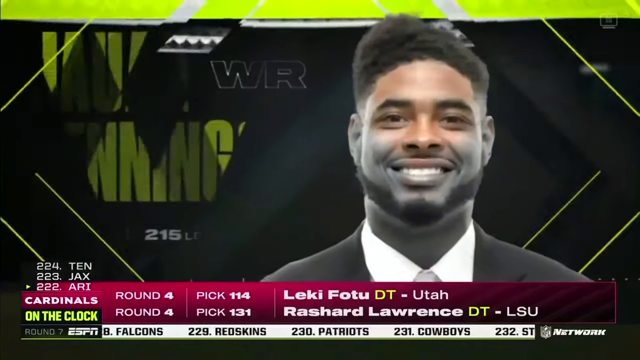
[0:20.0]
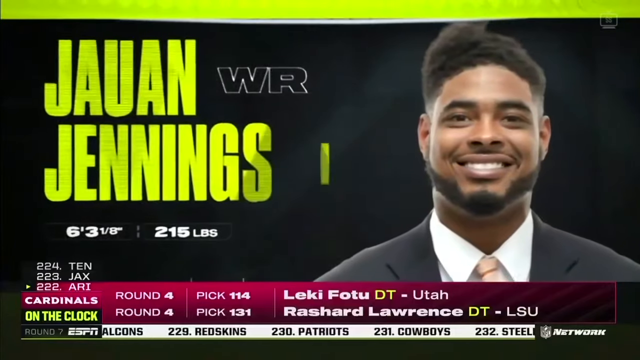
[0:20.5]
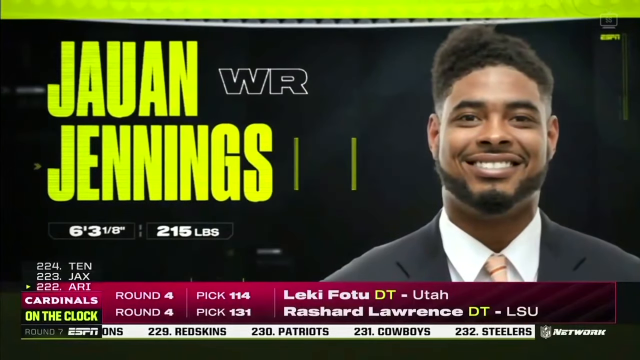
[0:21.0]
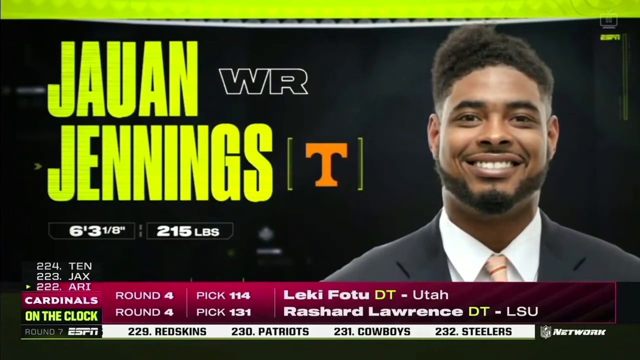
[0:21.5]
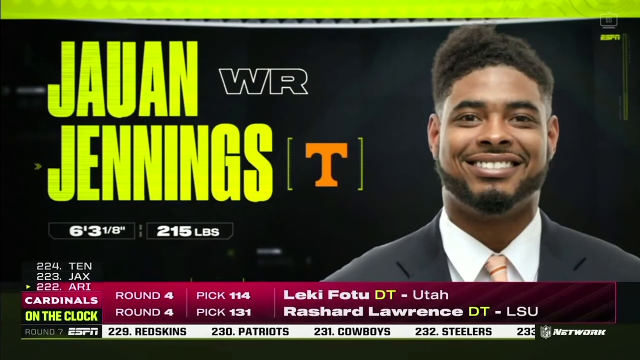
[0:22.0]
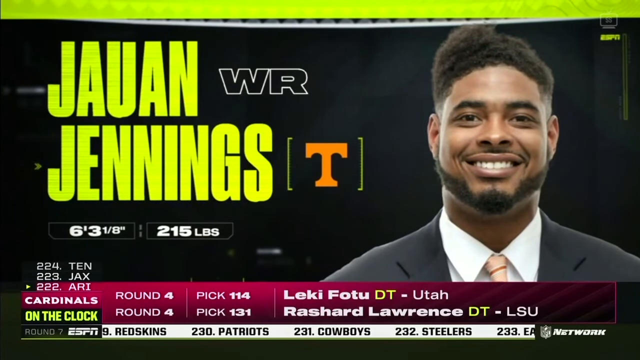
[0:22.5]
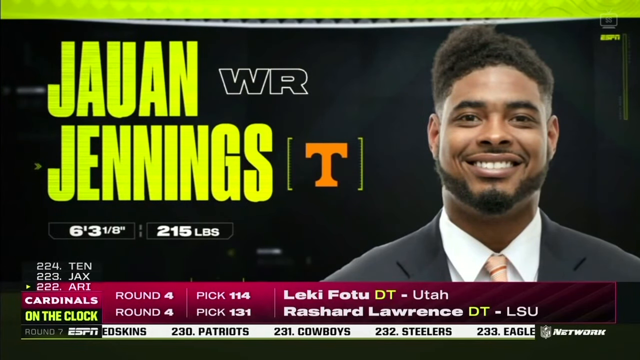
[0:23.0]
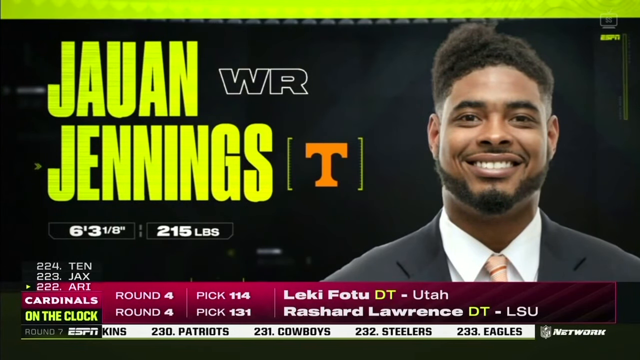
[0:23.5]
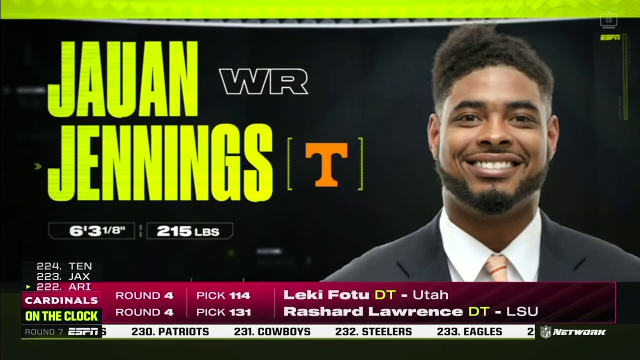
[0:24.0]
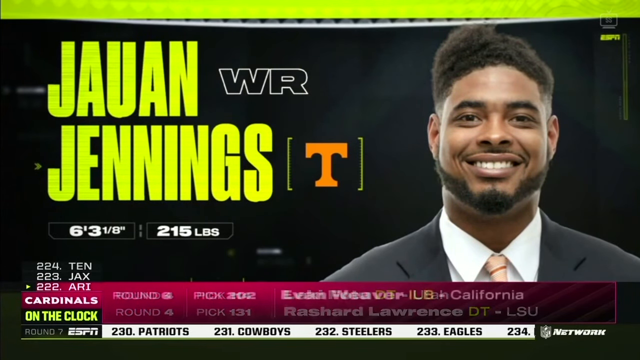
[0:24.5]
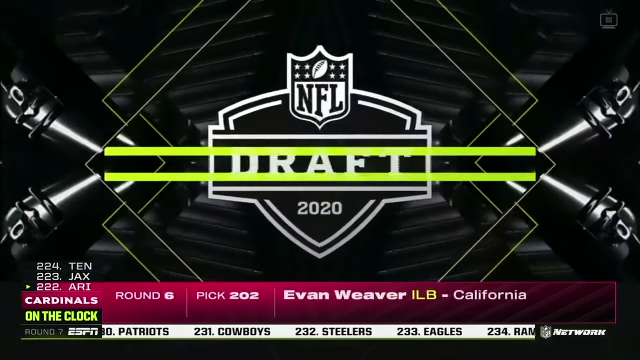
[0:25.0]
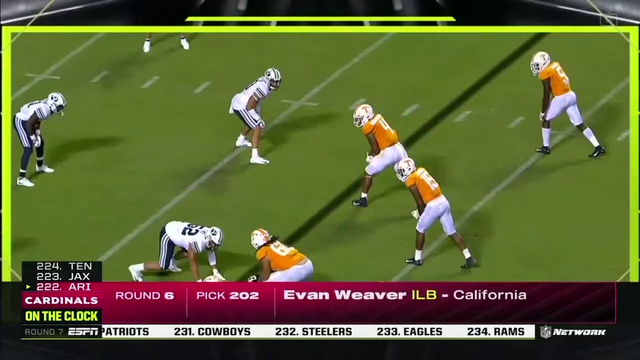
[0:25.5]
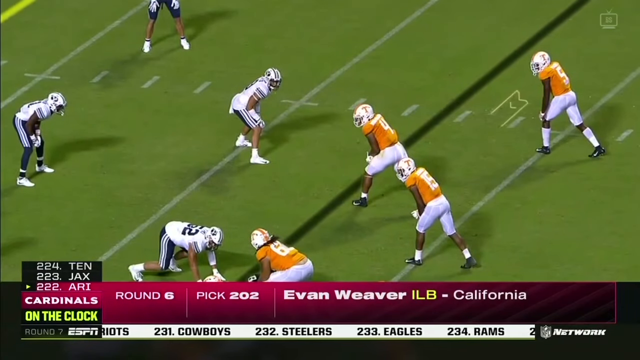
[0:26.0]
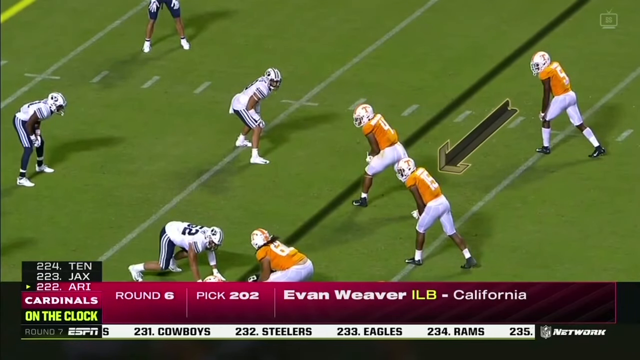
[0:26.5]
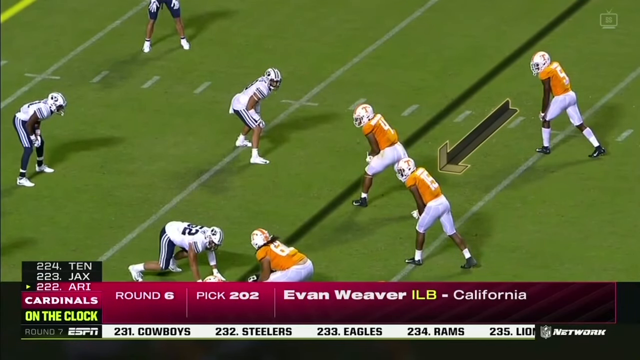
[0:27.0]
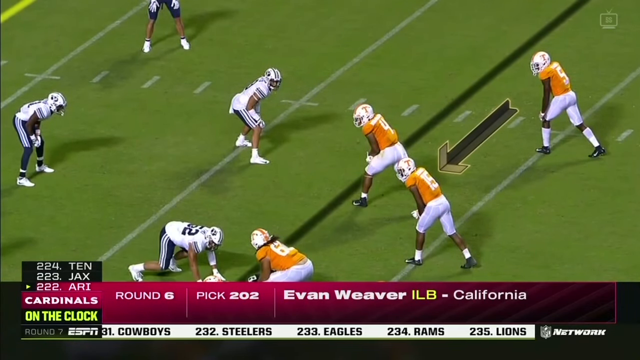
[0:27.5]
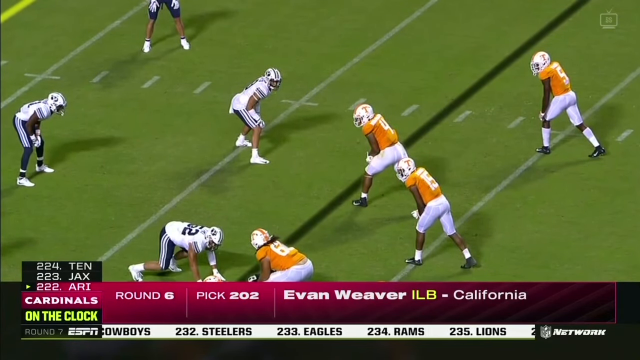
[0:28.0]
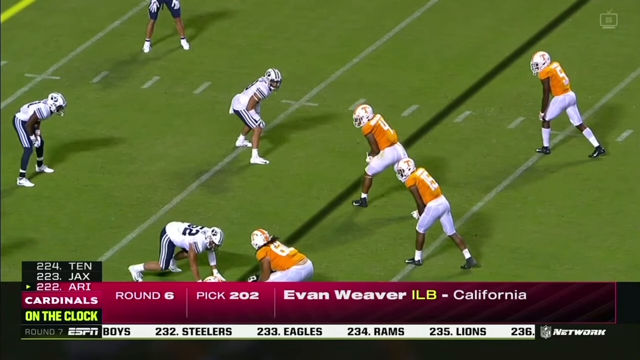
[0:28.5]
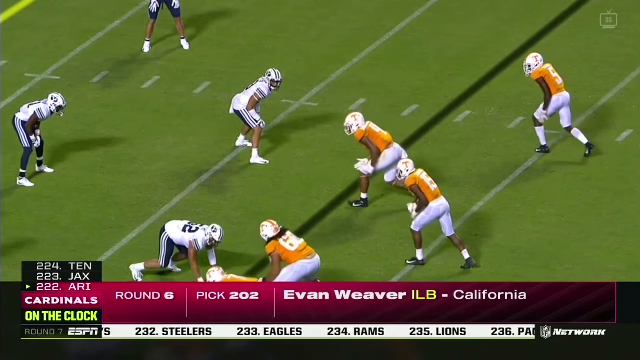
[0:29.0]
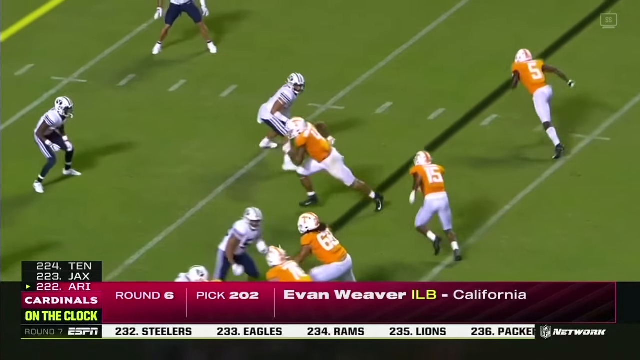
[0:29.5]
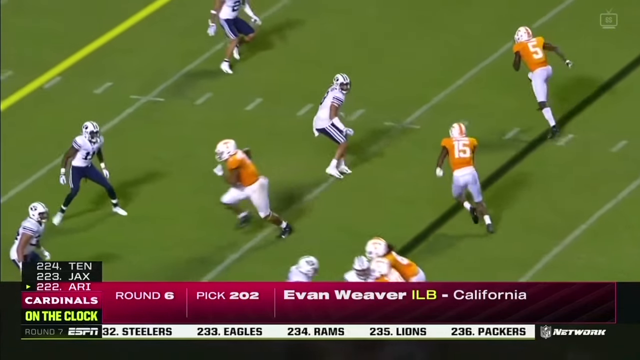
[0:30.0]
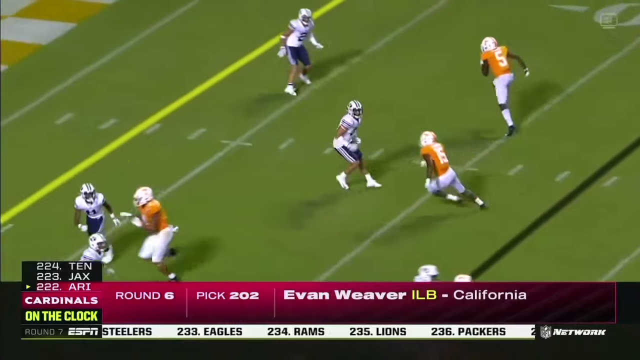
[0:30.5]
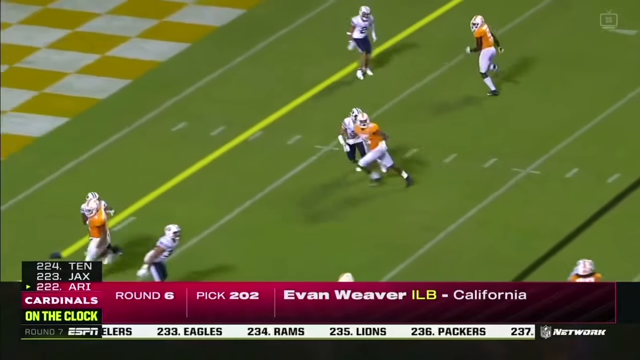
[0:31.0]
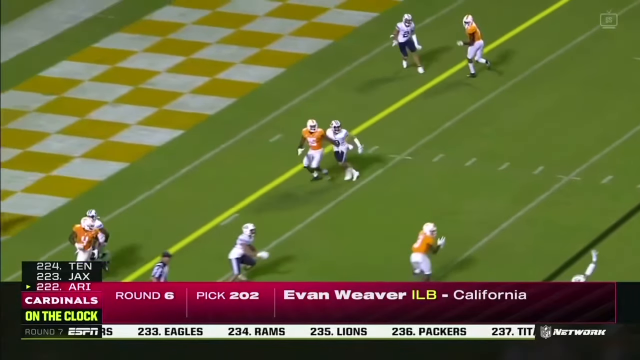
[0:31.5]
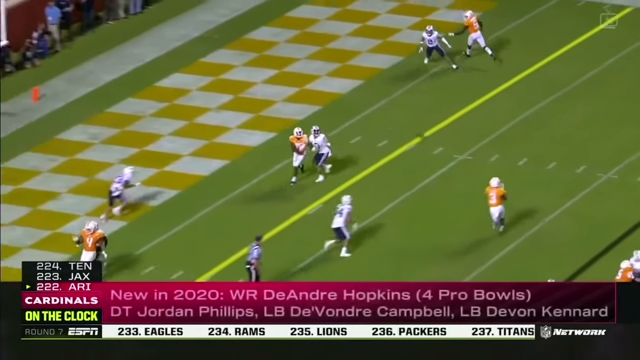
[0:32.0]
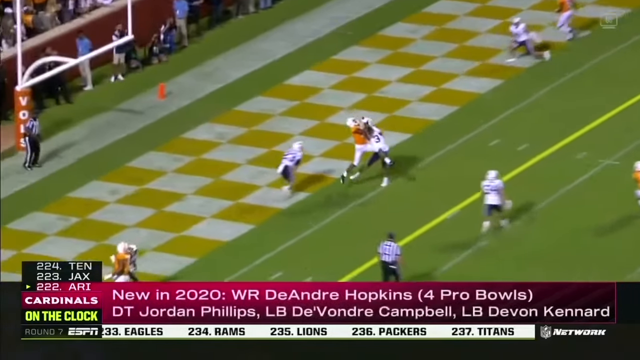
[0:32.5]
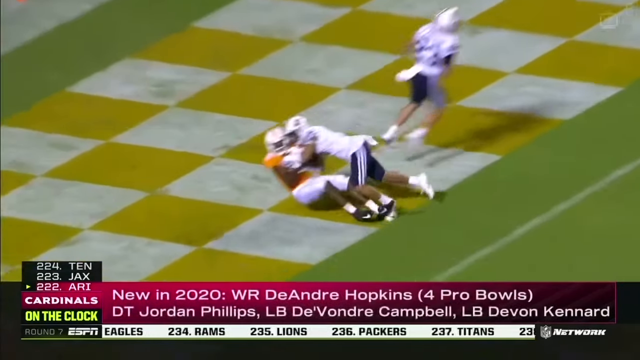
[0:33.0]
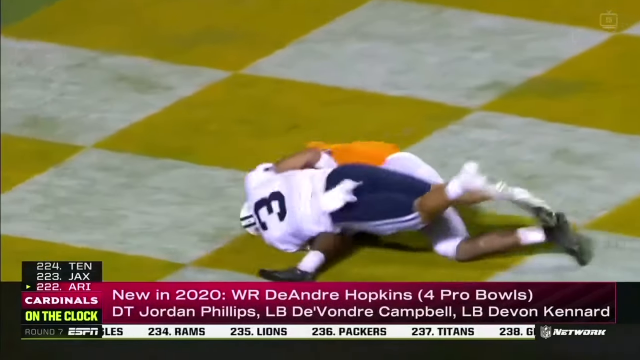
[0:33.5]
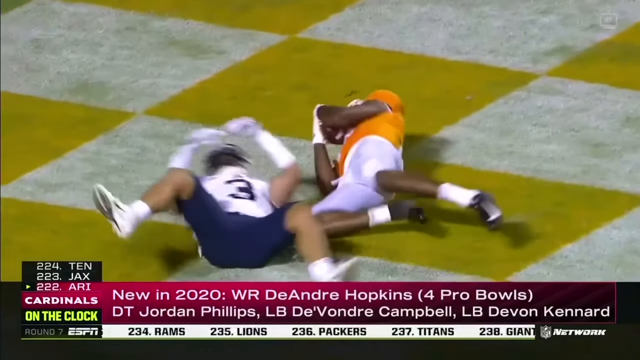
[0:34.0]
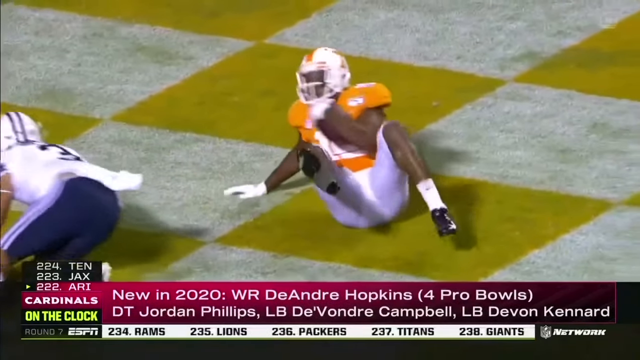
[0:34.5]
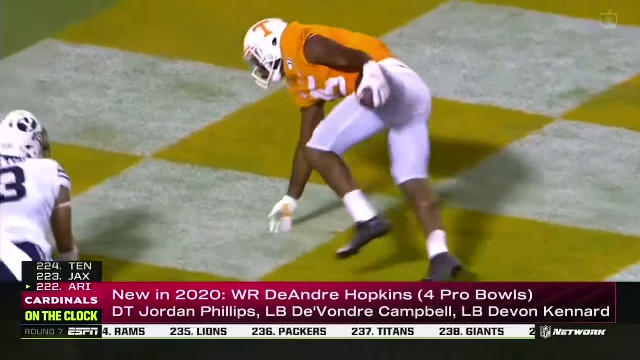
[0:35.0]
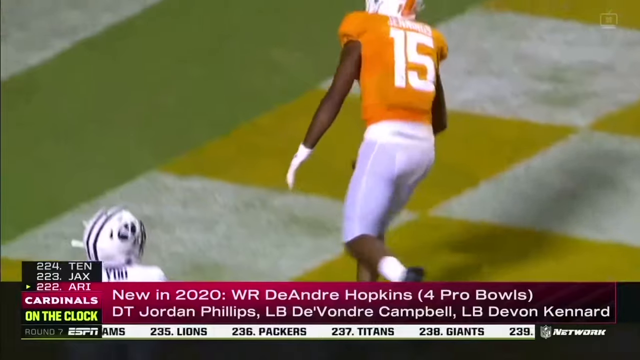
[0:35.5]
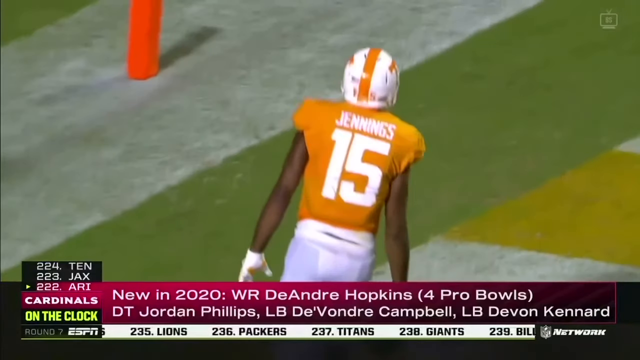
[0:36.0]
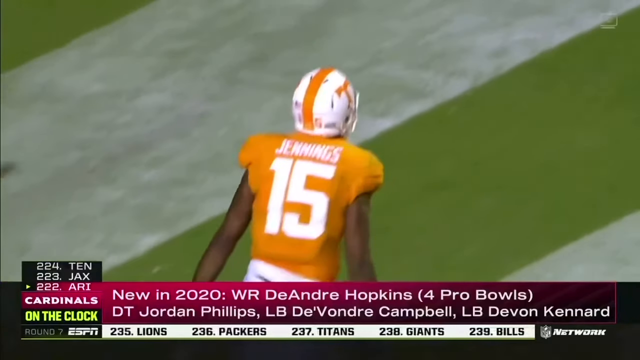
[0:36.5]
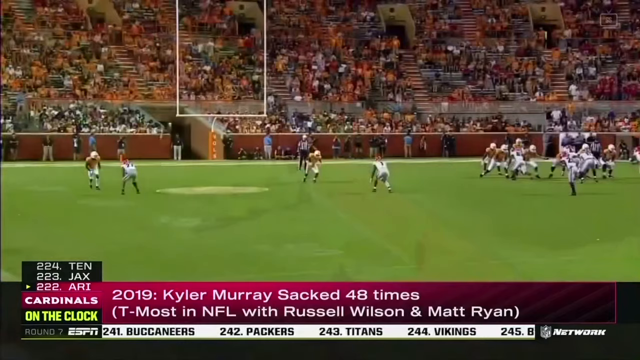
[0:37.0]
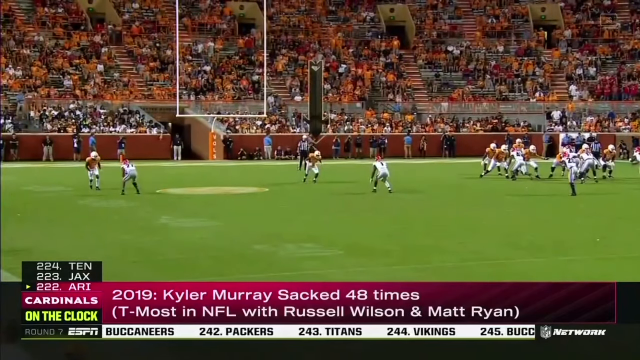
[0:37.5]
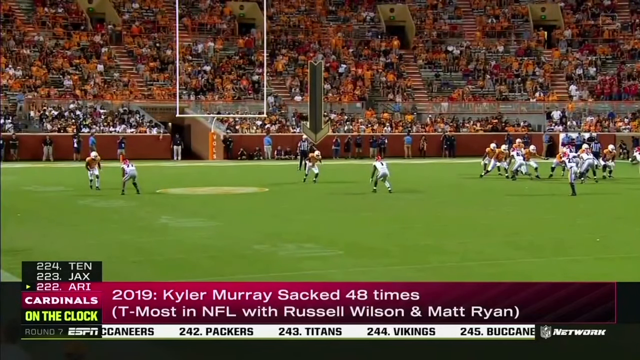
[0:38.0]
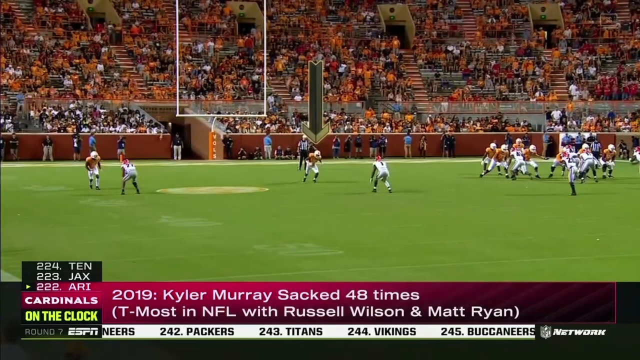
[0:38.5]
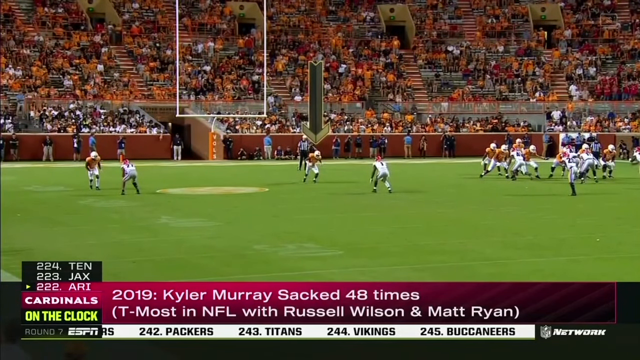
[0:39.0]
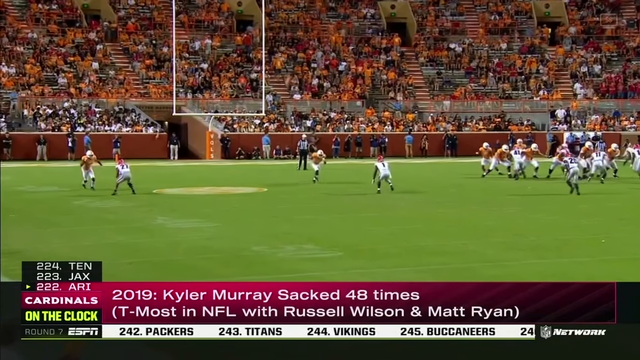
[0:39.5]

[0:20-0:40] A picture of Juwan Jennings appears with "WR" beside him, meaning wide receiver, and a "T" for Tennessee. Text reads "NFL Draft 2020." The shot switches to game footage: an arrow points at Jennings, the footage goes into motion, and he runs into the end zone, catches the ball and fights it away from a defender. He wears number 15 and runs to the back celebrating. He is shown once more before the footage cuts out. A scroller runs to the left along the bottom, listing which team has which pick, such as "230" for the Cowboys, "232" for the Steelers and "233" for the Eagles, with the numbers rising as it goes. Above the scroller, information appears such as "round four pick 114," "round eight pick 202," "Evan Weaver, ILB California," and "new in 2020 W.R. DeAndre Hopkins," with Pro Bowl information for 2019.